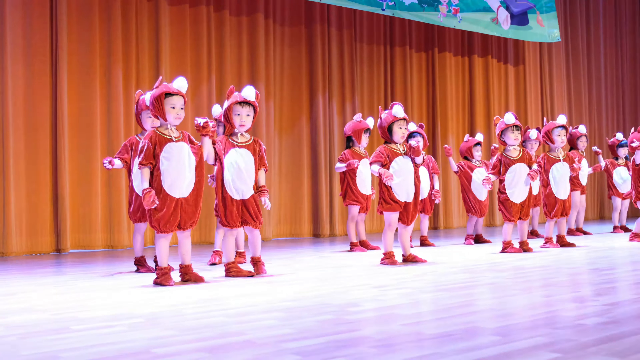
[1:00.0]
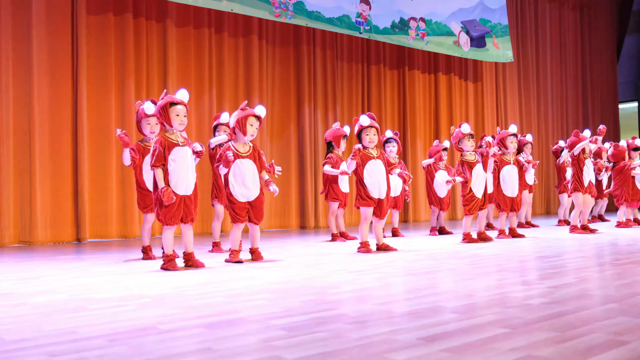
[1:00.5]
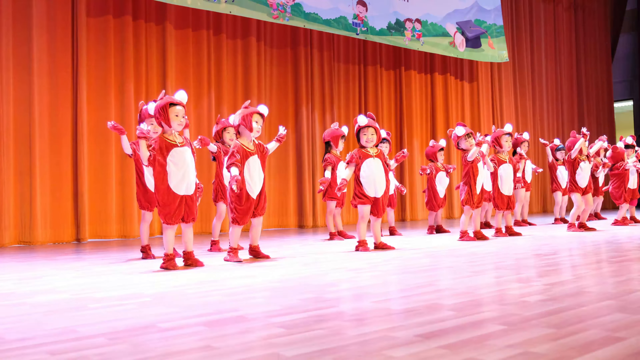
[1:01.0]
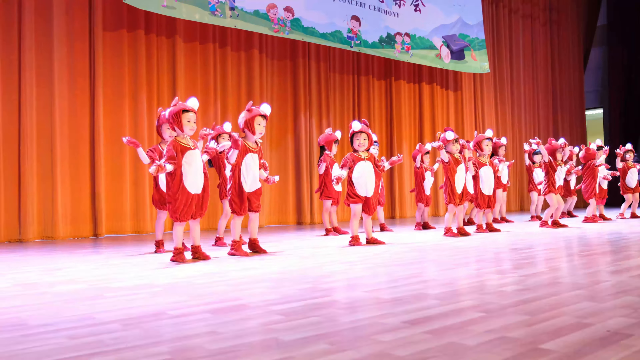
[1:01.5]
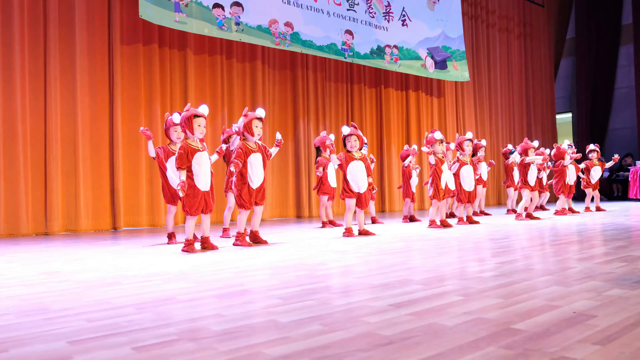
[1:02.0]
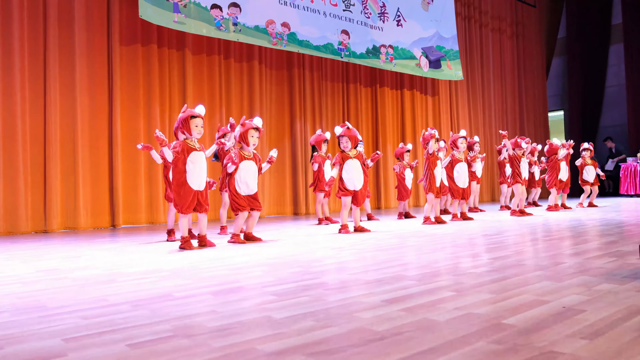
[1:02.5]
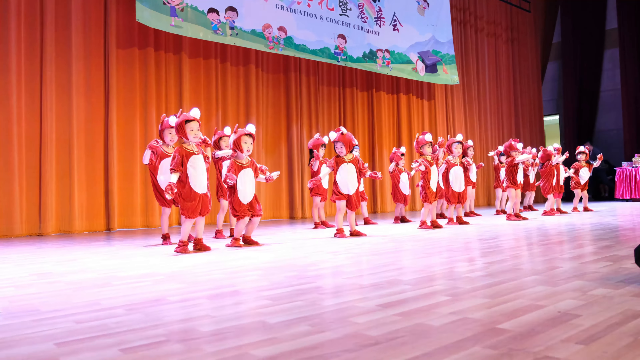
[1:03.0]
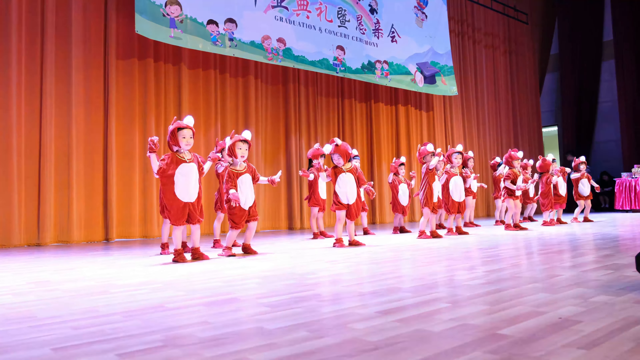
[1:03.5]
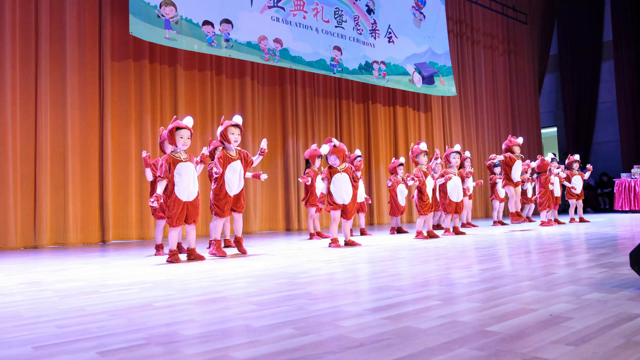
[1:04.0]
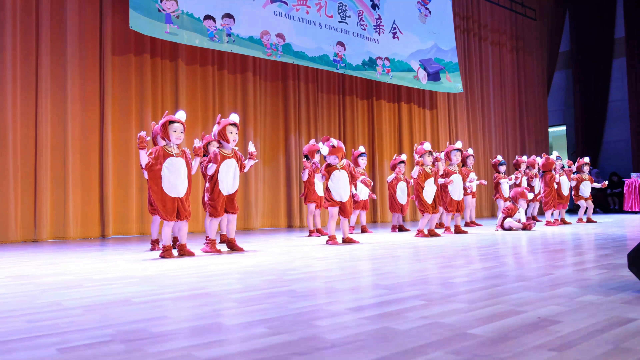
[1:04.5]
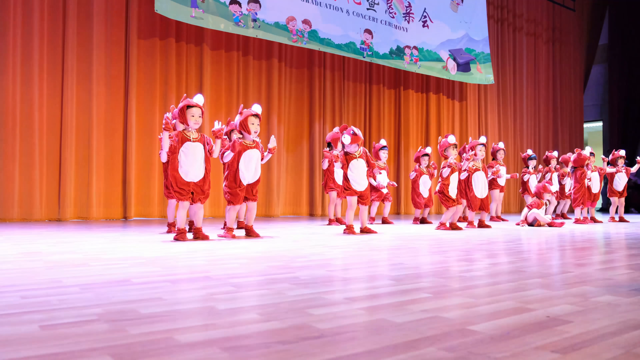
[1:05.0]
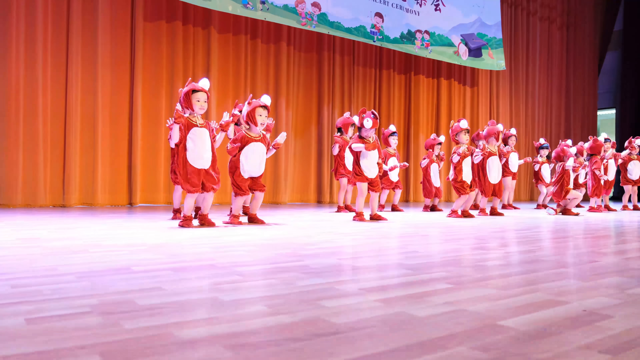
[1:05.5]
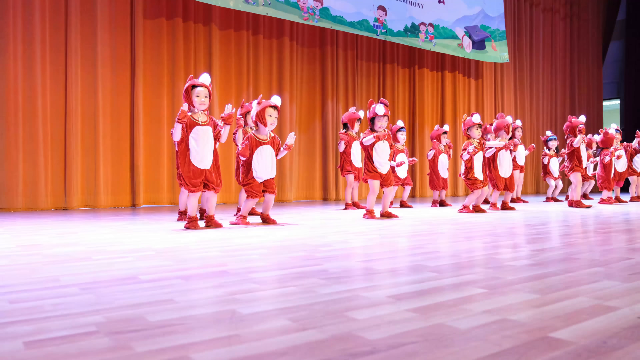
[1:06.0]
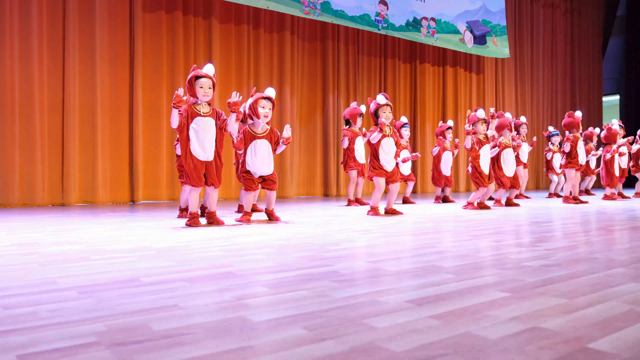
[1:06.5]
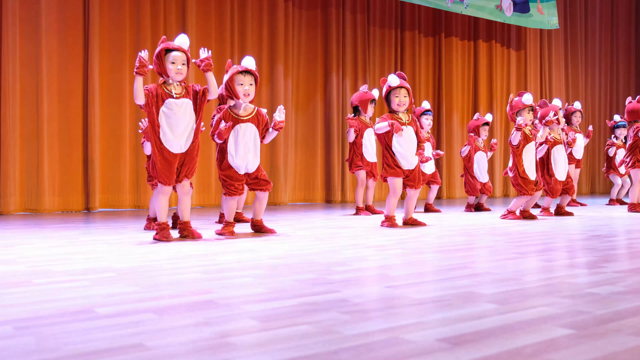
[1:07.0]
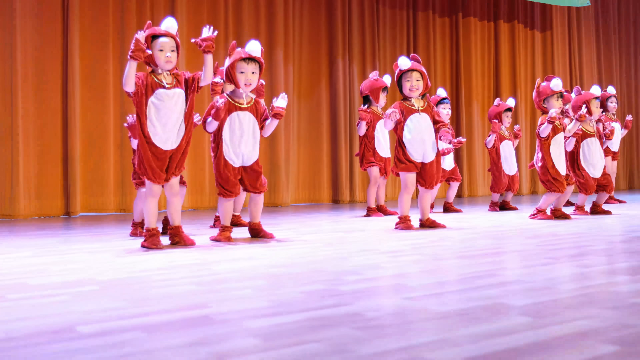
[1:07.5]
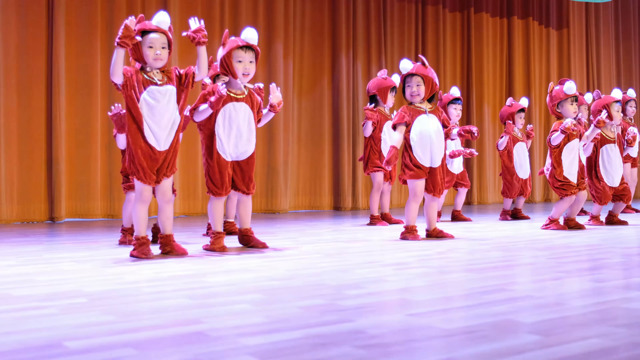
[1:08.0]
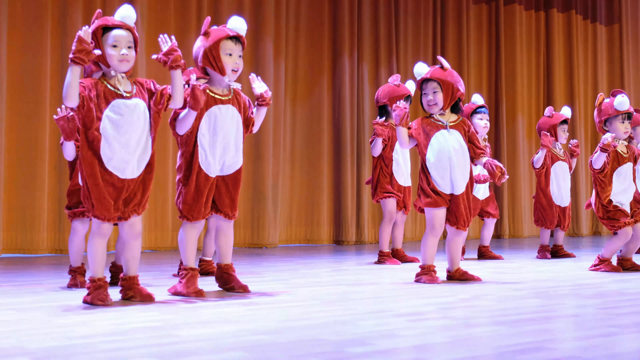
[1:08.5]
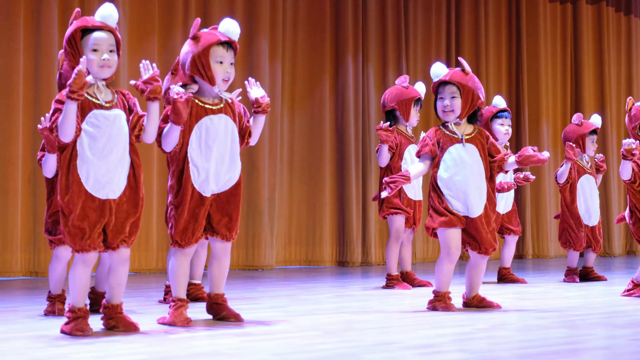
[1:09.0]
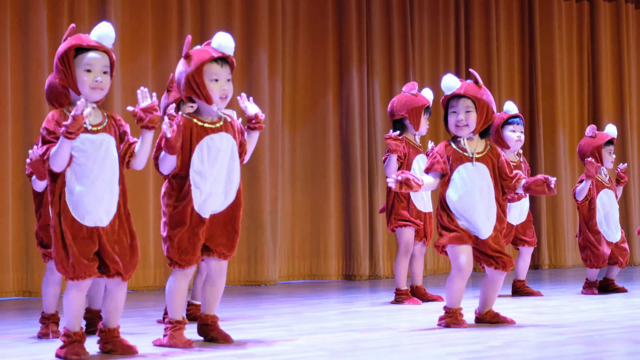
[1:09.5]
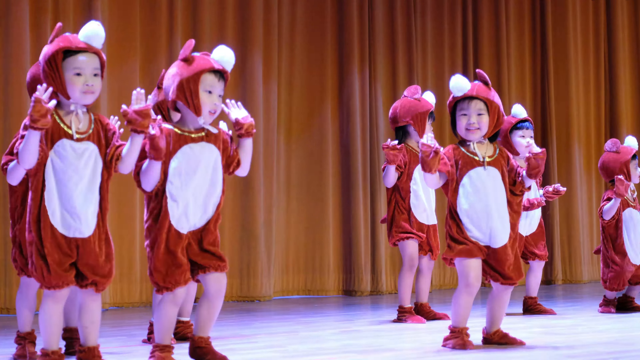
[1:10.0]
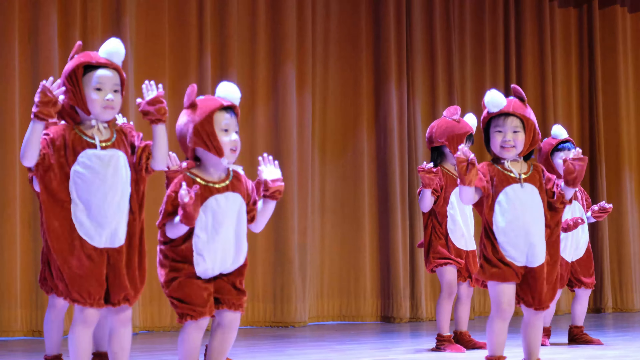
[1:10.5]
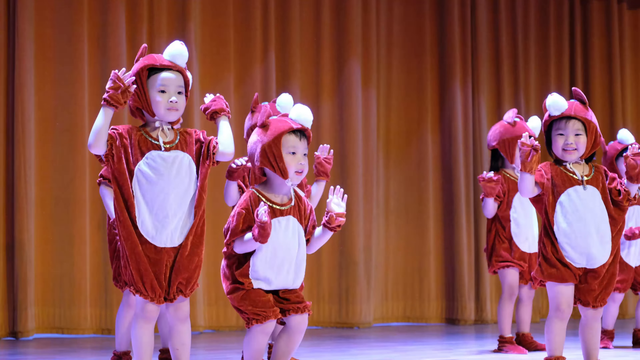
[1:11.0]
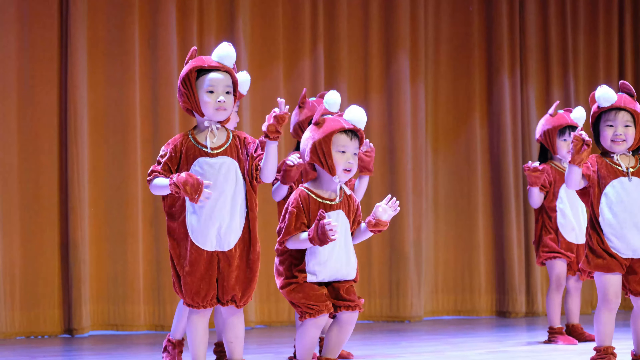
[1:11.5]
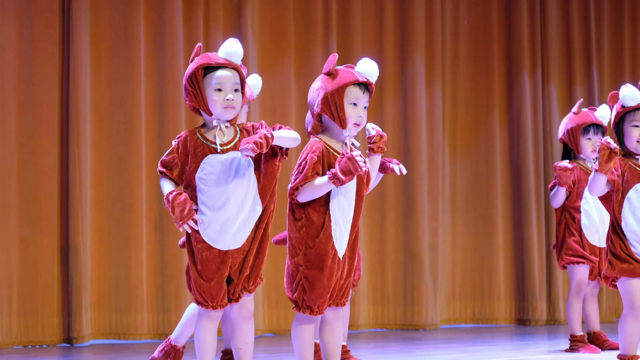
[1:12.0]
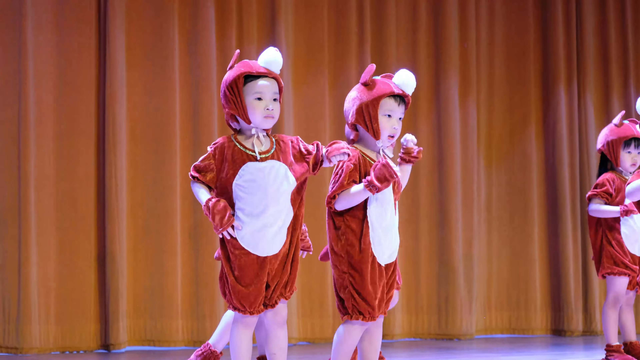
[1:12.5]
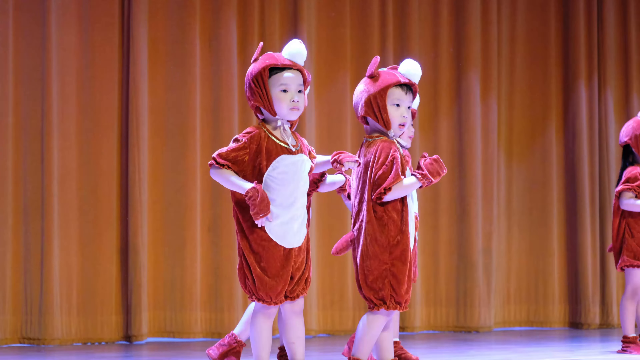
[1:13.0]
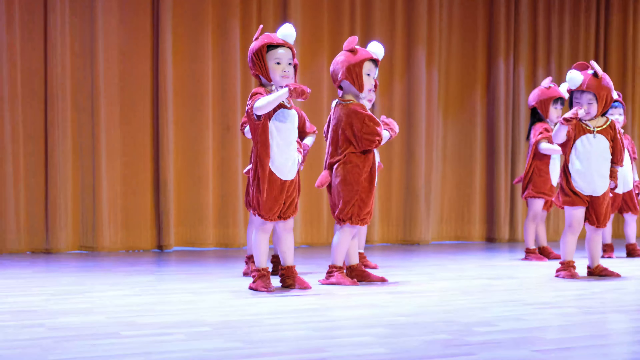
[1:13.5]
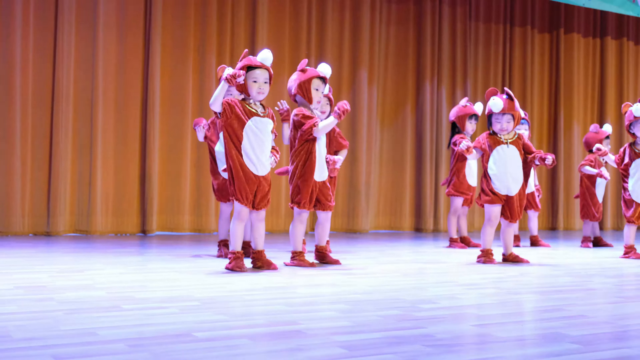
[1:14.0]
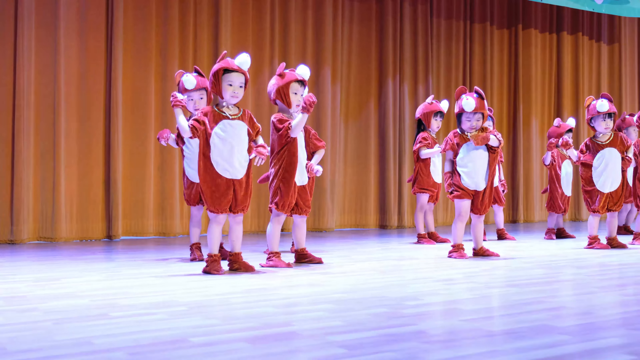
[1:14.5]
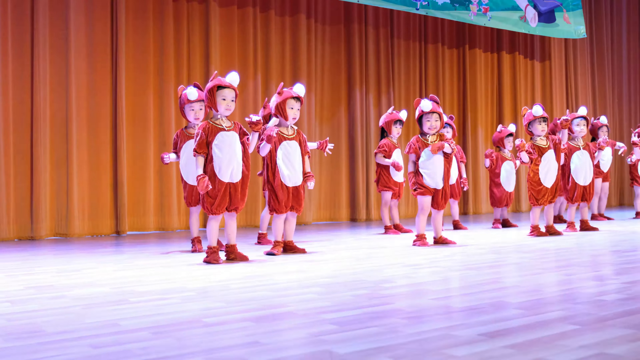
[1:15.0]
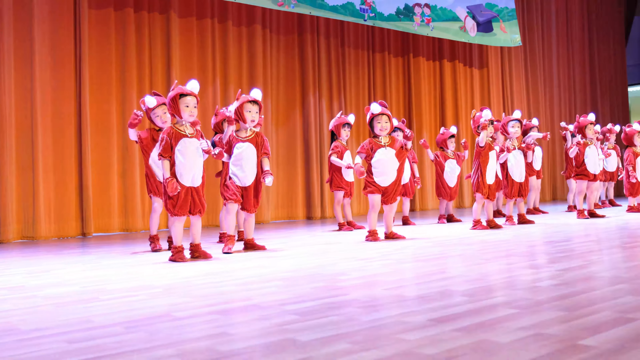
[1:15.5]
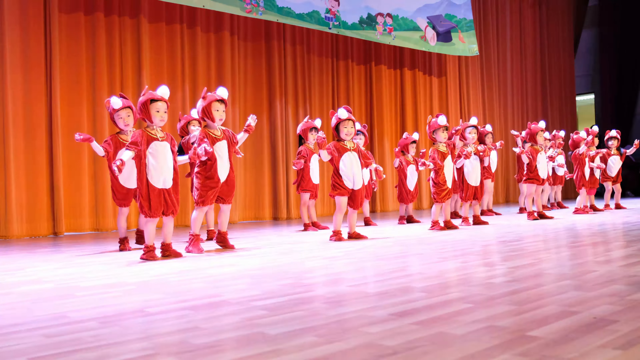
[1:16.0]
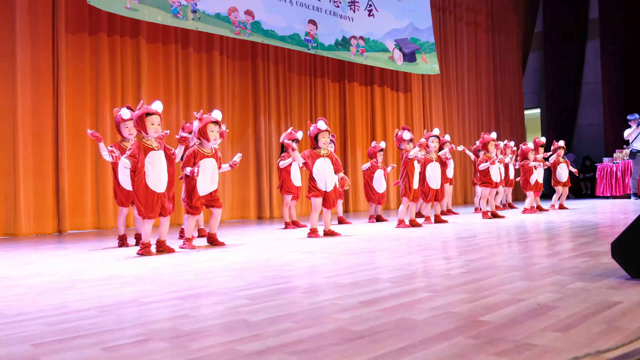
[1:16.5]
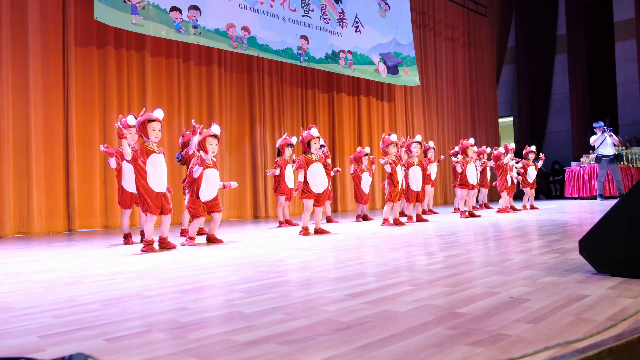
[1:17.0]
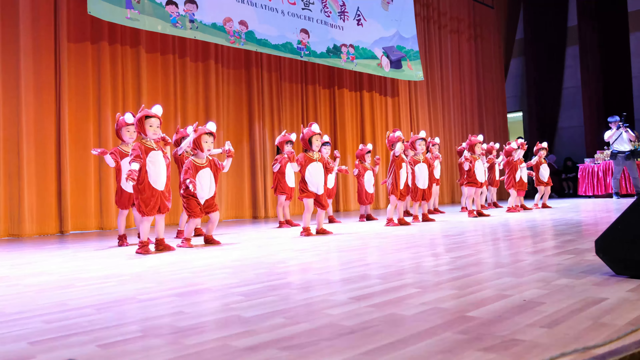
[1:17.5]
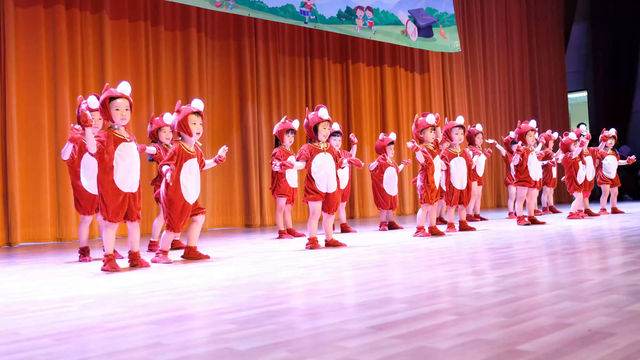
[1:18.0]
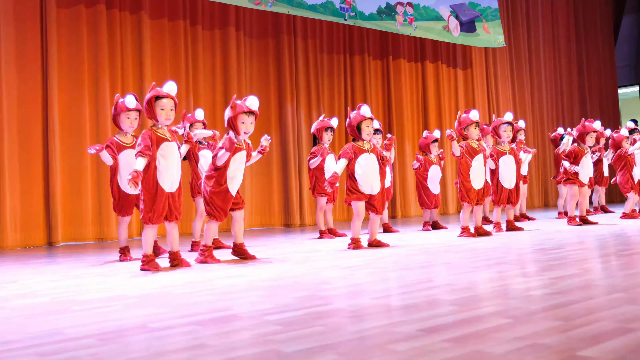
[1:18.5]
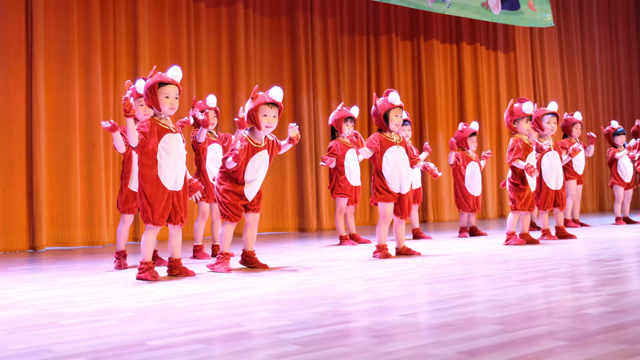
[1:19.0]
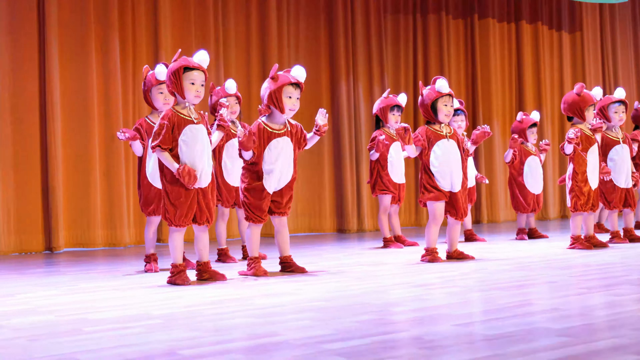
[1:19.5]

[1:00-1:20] The kids keep dancing on stage in their red and white dinosaur costumes. The camera zooms out to a wider shot of the stage, and one of the kids on the far right side of the frame, the left side of the stage, falls down mid-dance in a little tumble, staying there for a second while the rest of the group keeps dancing. The stage curtain in the background is bright orange. The camera then zooms back in on the same one or two kids as earlier, who do the bouncy knee dance while apparently waving at the audience very enthusiastically. Meanwhile, some of the other kids seem to be doing their own thing, dancing in different directions.